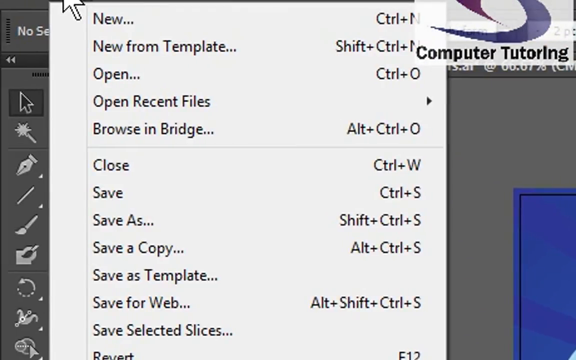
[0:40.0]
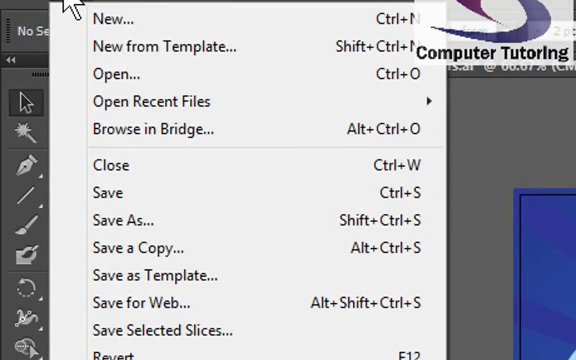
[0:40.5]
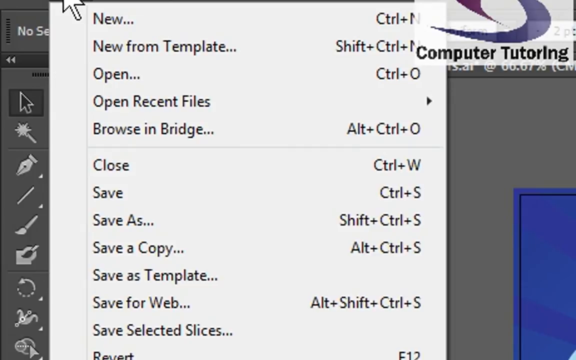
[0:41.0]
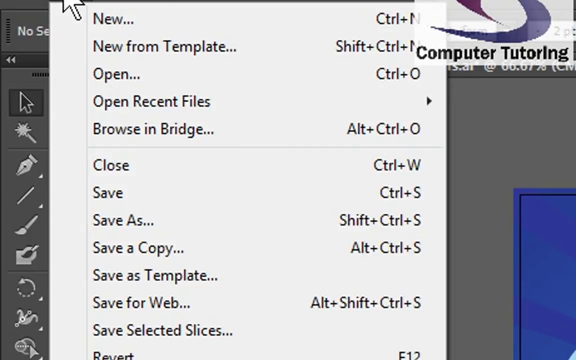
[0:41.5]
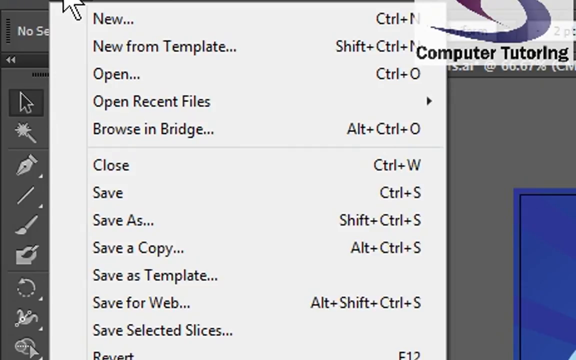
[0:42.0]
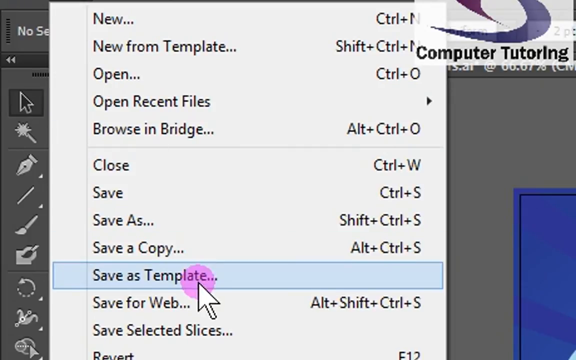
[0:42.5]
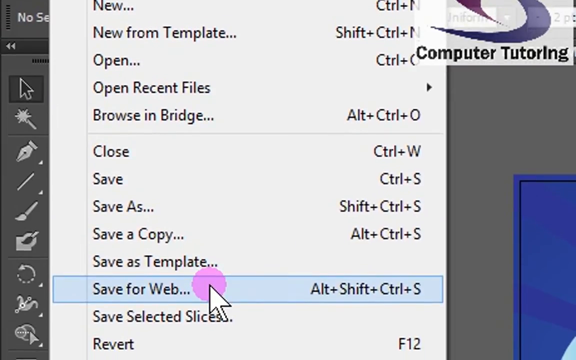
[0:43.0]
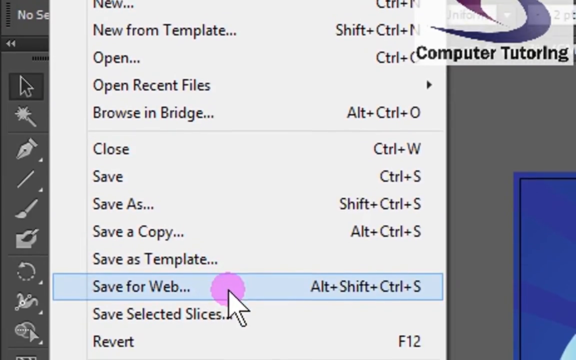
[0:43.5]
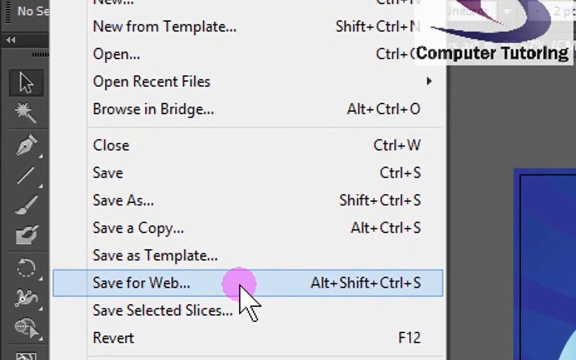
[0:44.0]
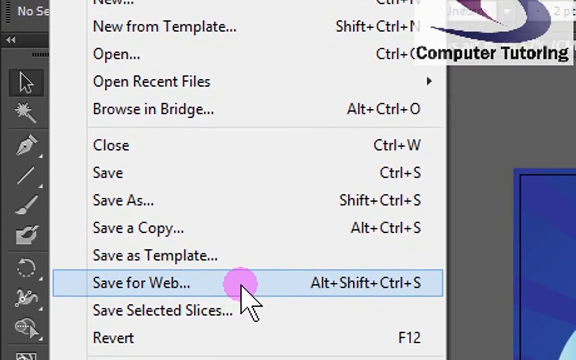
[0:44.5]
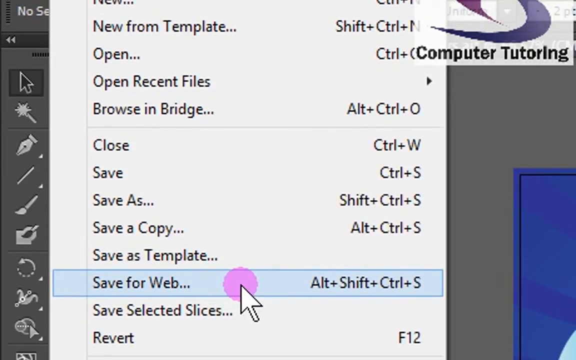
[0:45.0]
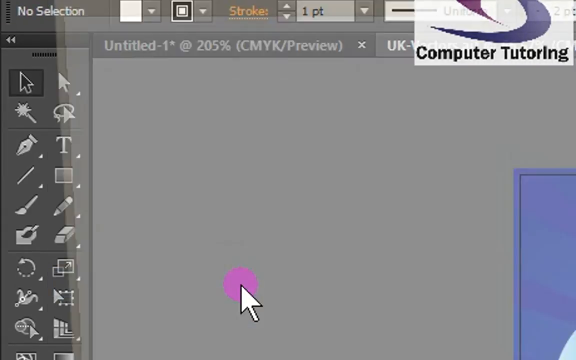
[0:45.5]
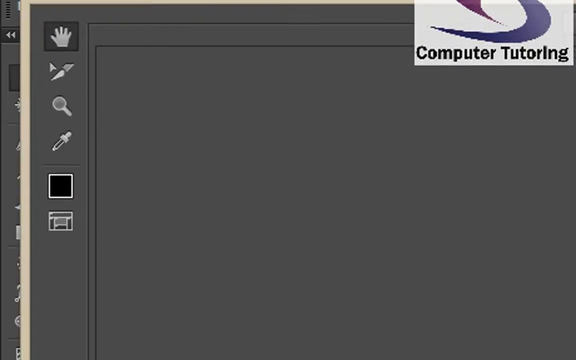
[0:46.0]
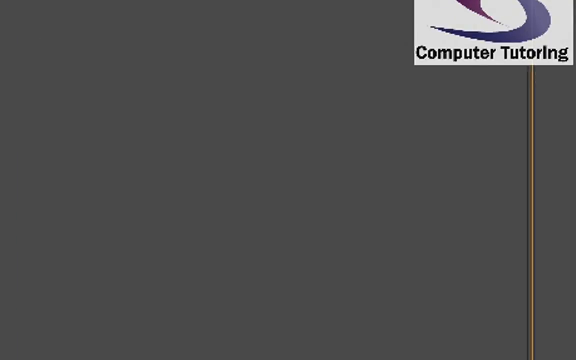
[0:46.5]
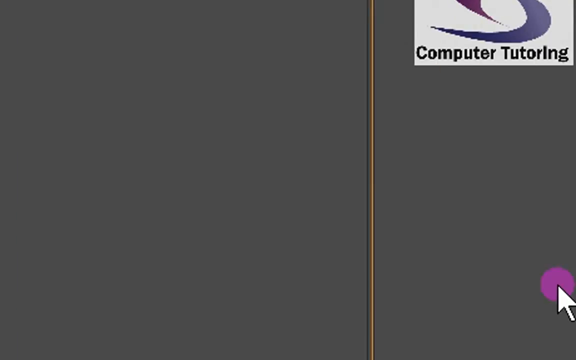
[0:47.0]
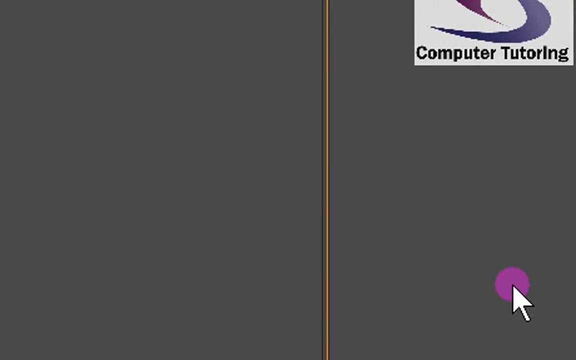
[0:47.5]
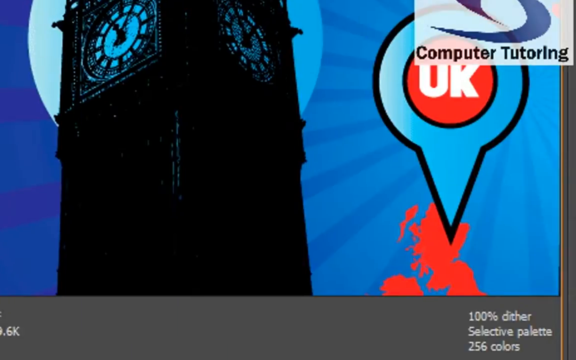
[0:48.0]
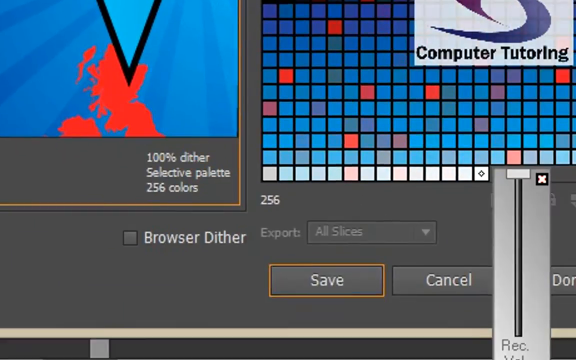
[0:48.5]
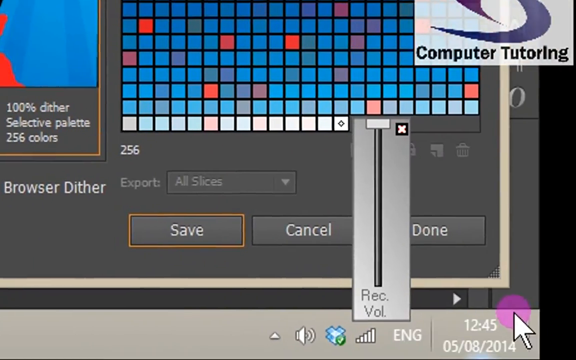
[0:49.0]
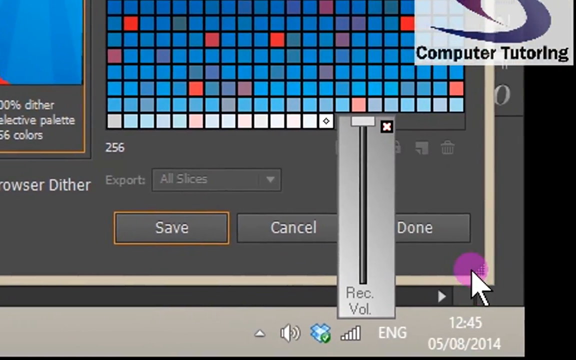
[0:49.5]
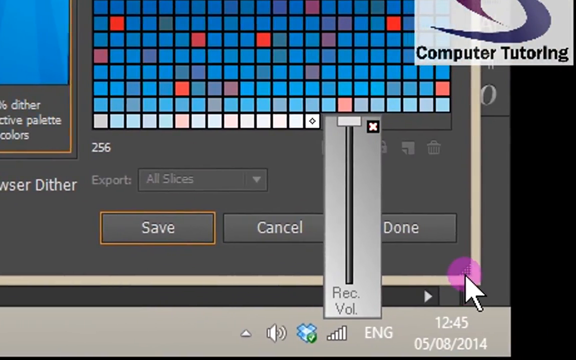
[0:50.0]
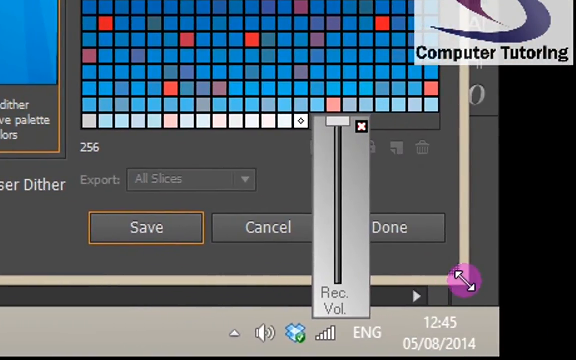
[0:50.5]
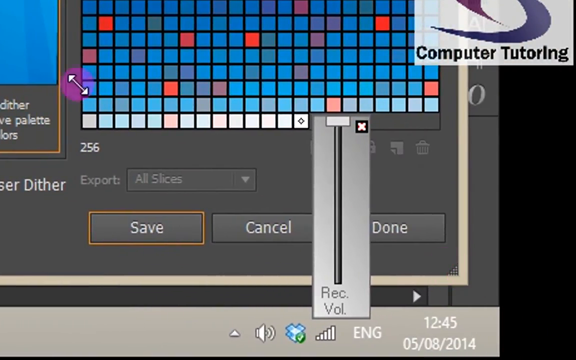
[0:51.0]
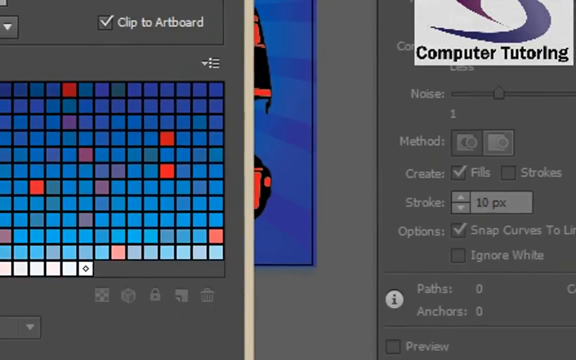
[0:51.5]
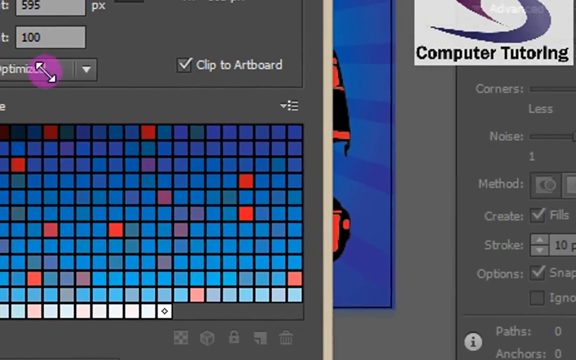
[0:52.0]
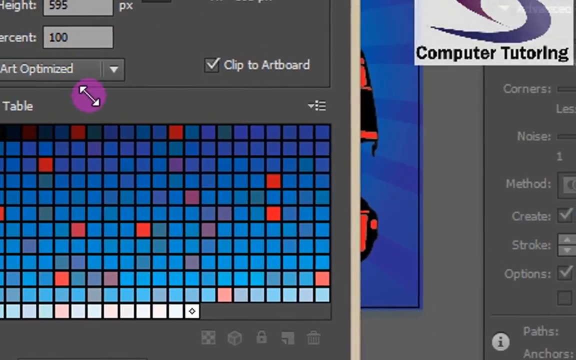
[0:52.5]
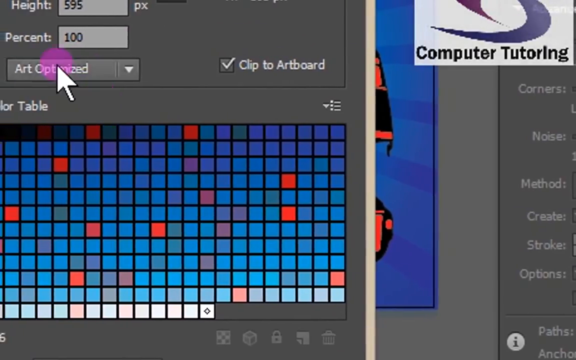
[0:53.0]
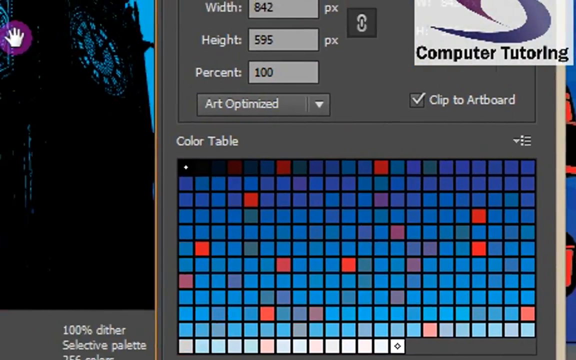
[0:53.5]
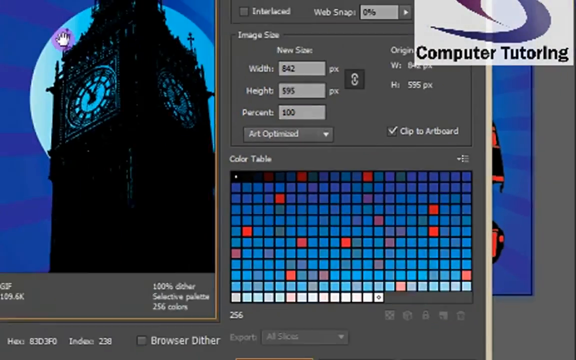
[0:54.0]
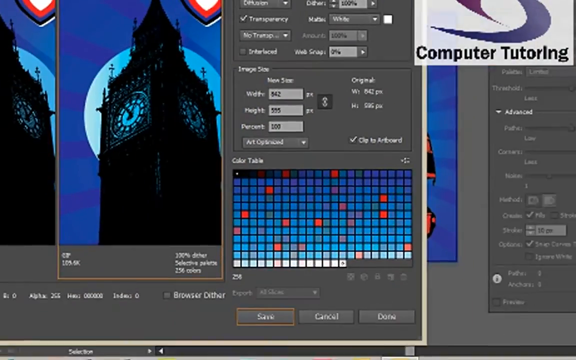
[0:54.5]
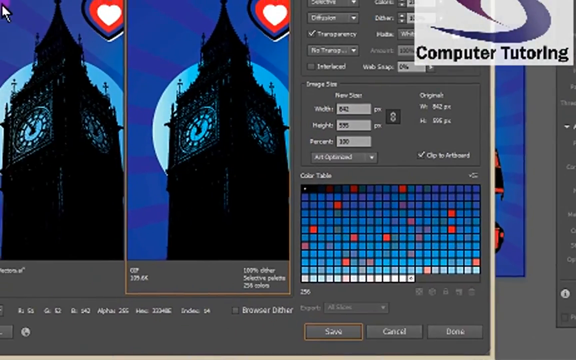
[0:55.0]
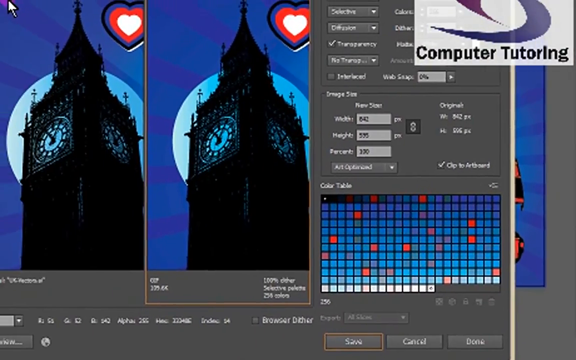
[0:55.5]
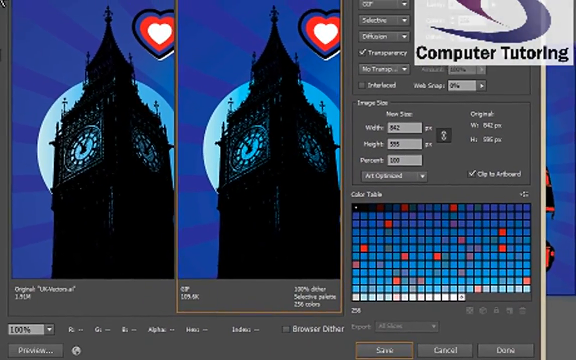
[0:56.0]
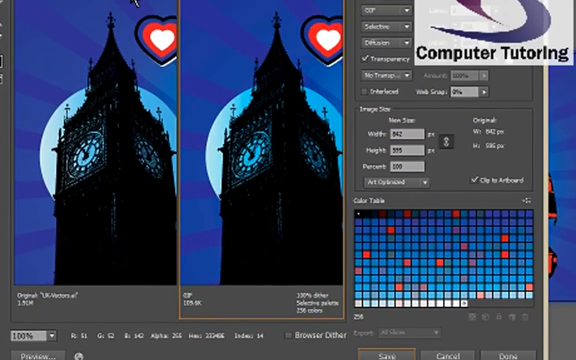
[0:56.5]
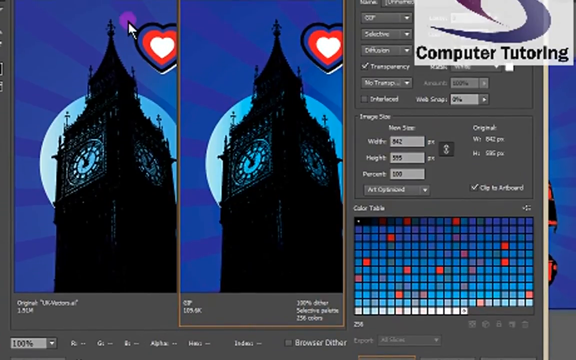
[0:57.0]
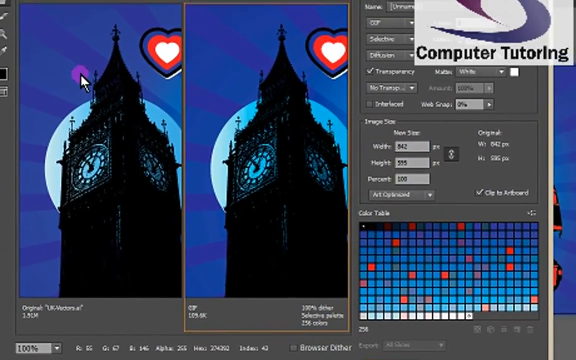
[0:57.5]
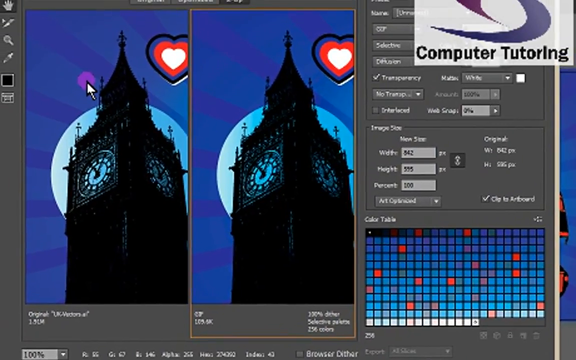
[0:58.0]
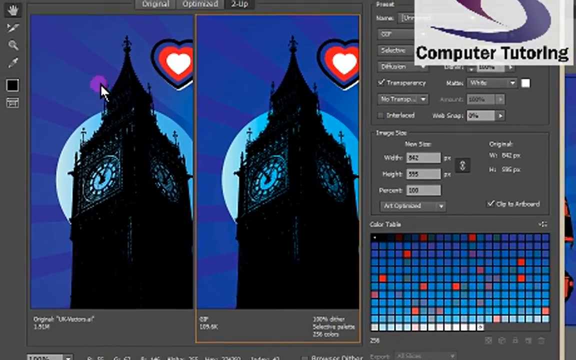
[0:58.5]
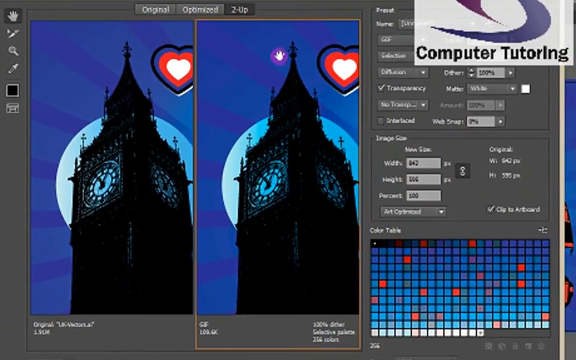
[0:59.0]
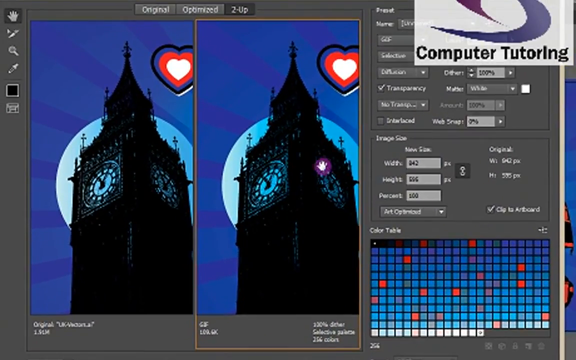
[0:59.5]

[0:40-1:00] In a computer training video, "computer tutoring" appears in the right-hand corner with a logo shaped like a swirl going from the left up to the right and then out again, colored purple, blue and gray. The person has been looking at a picture with things like Big Ben, a flag and a map. They click a tab with a pull-down menu like the one used when saving a document in Windows, reading "new, new from template, open, open, recent files, browse, in bridge, close, save, save as, save a copy, save as template, save as web". The person clicks on save for web and scrolls down to the picture, and a window pops up. Another window with colored squares pops up, and one piece of the picture with just Big Ben and the heart is highlighted. The cursor hovers over different parts of it. A panel then pops up that shows settings for the margins.